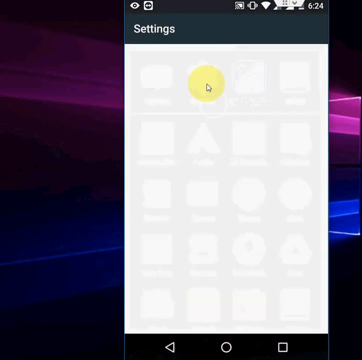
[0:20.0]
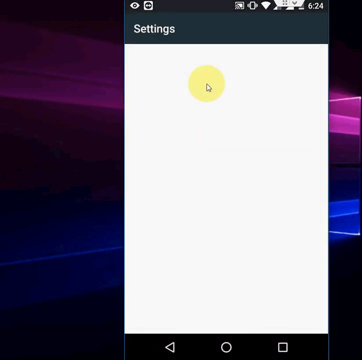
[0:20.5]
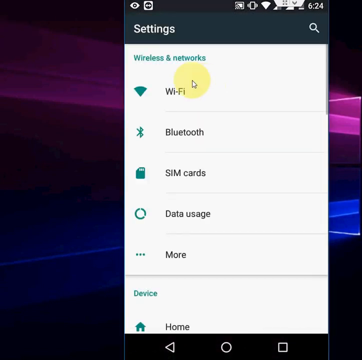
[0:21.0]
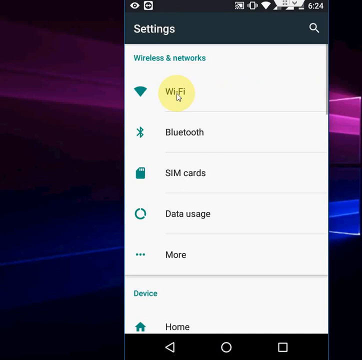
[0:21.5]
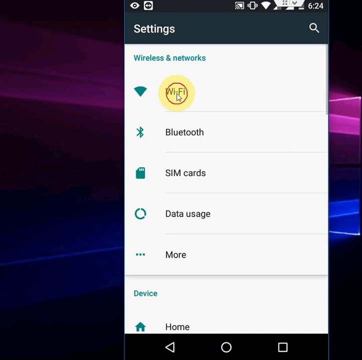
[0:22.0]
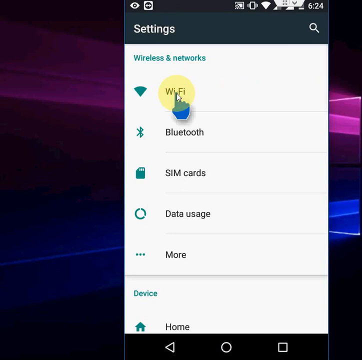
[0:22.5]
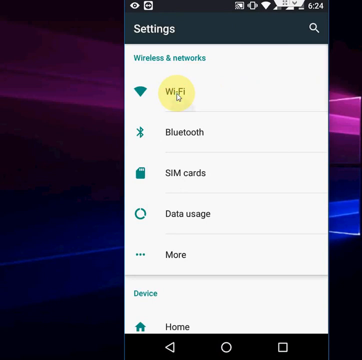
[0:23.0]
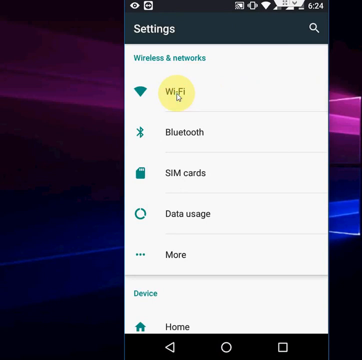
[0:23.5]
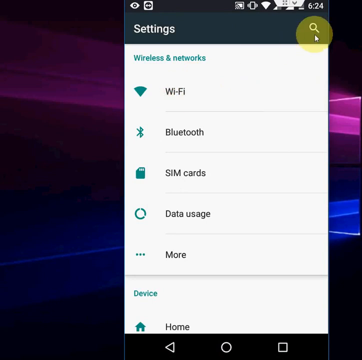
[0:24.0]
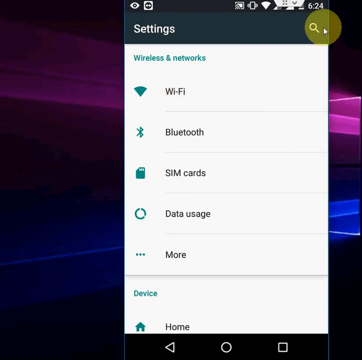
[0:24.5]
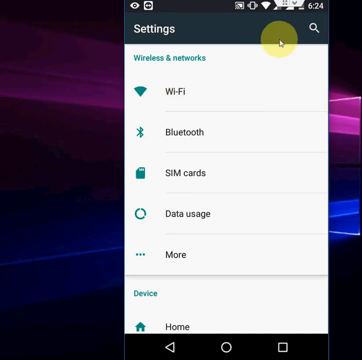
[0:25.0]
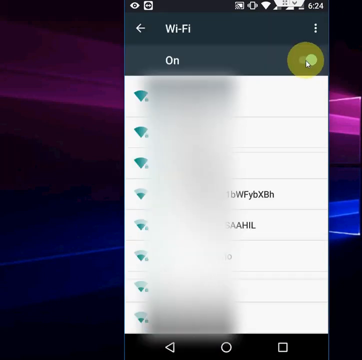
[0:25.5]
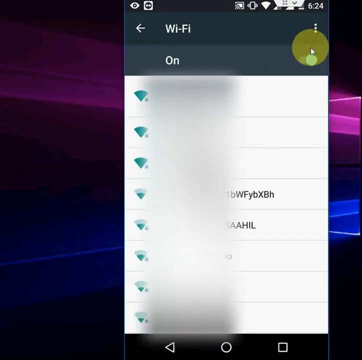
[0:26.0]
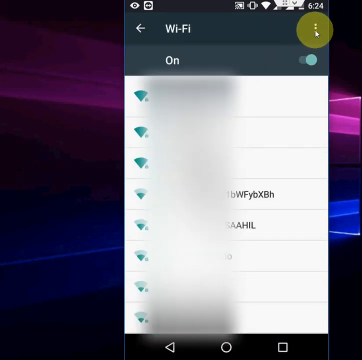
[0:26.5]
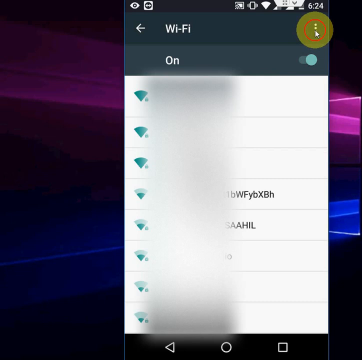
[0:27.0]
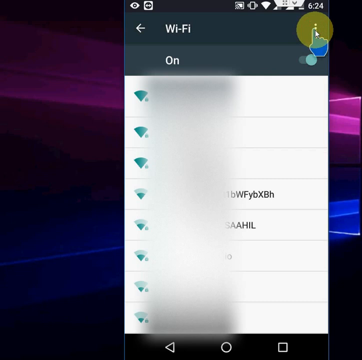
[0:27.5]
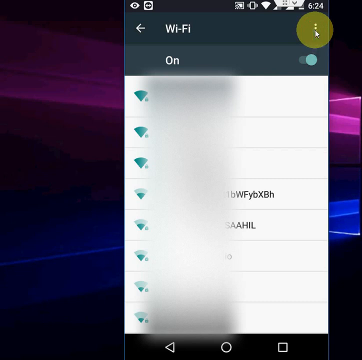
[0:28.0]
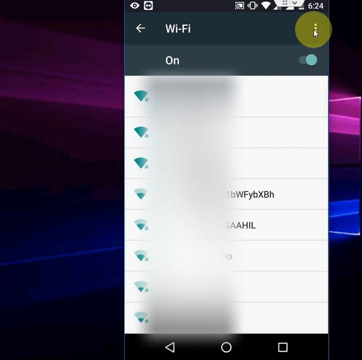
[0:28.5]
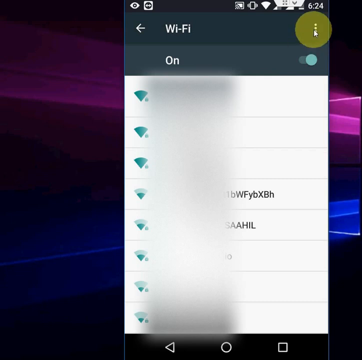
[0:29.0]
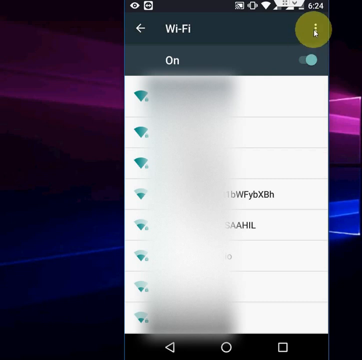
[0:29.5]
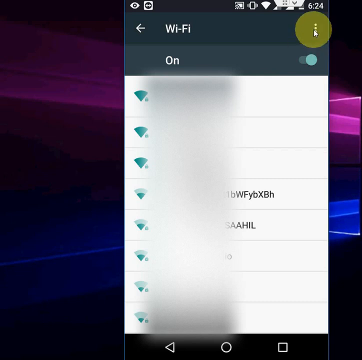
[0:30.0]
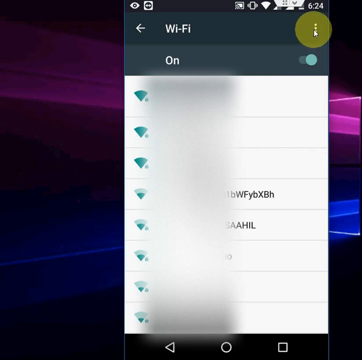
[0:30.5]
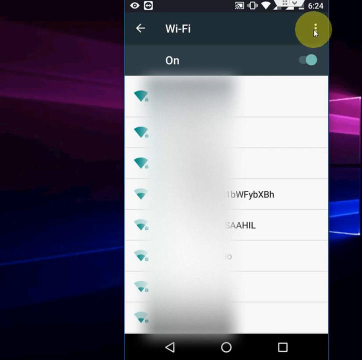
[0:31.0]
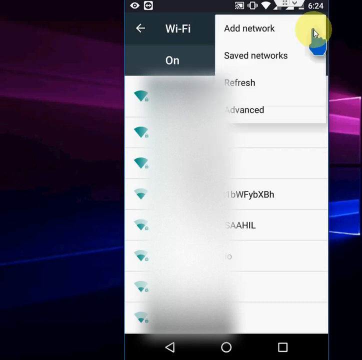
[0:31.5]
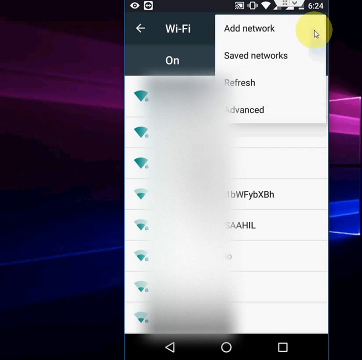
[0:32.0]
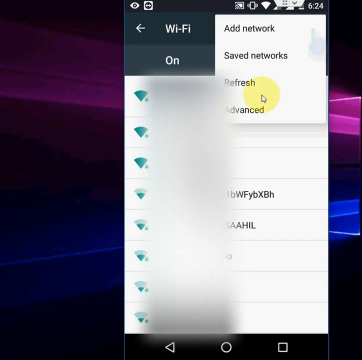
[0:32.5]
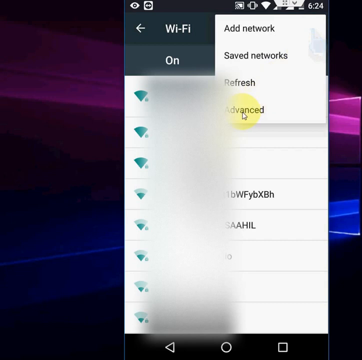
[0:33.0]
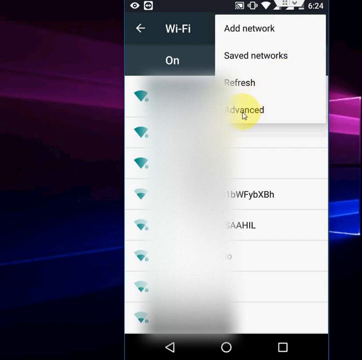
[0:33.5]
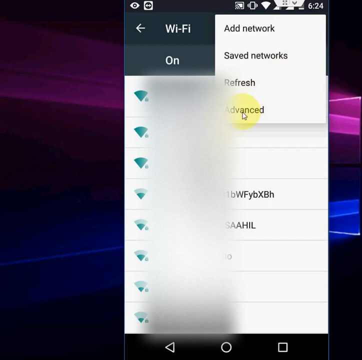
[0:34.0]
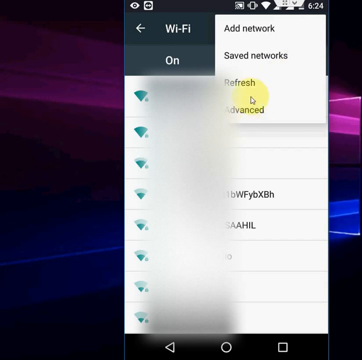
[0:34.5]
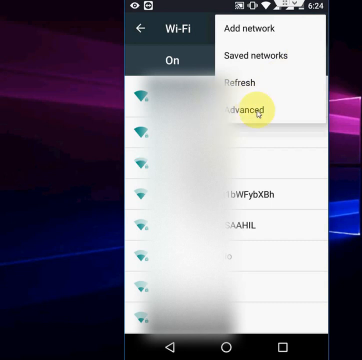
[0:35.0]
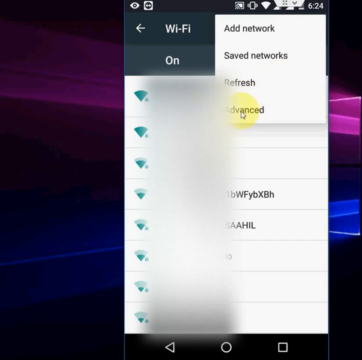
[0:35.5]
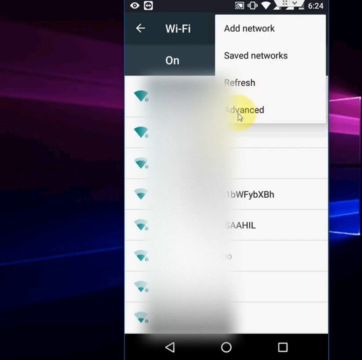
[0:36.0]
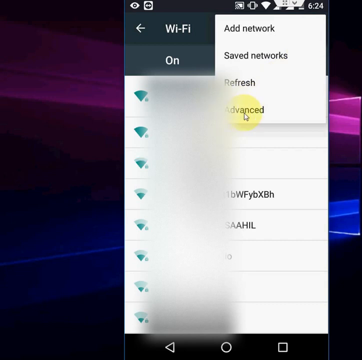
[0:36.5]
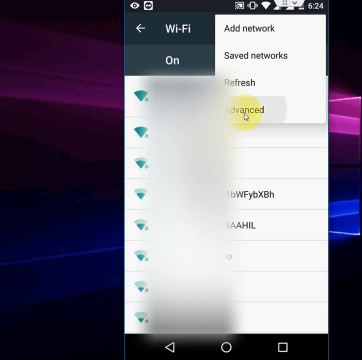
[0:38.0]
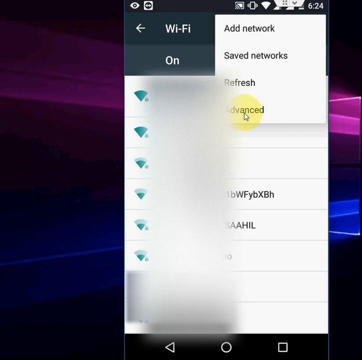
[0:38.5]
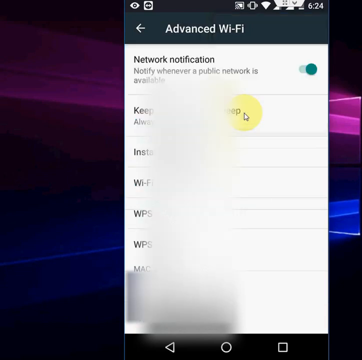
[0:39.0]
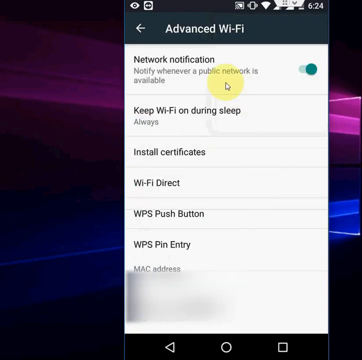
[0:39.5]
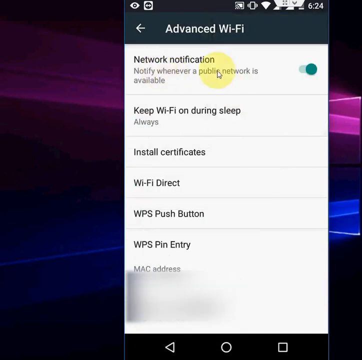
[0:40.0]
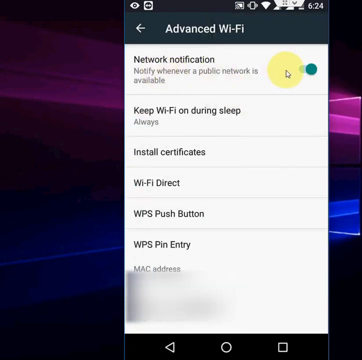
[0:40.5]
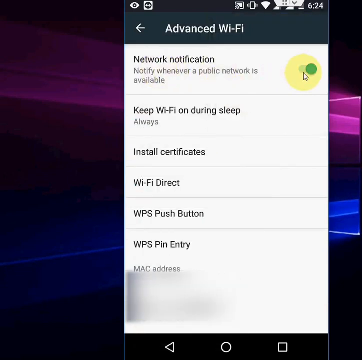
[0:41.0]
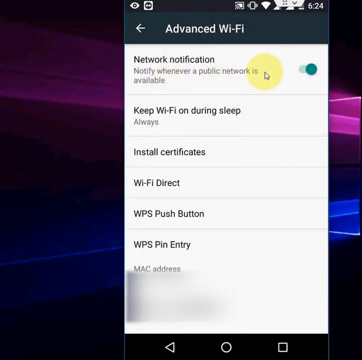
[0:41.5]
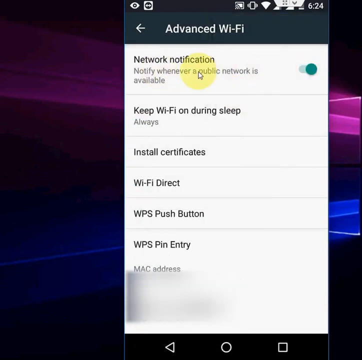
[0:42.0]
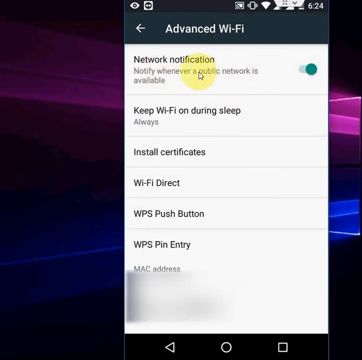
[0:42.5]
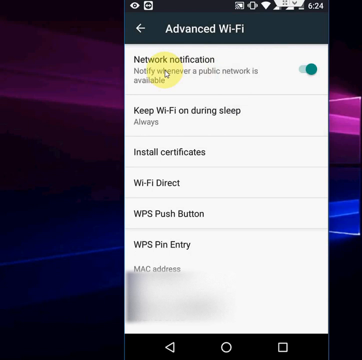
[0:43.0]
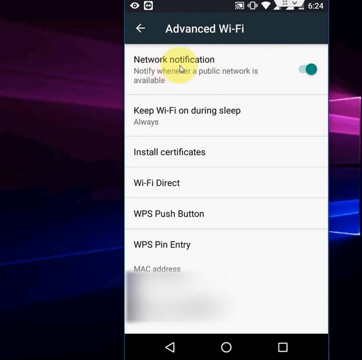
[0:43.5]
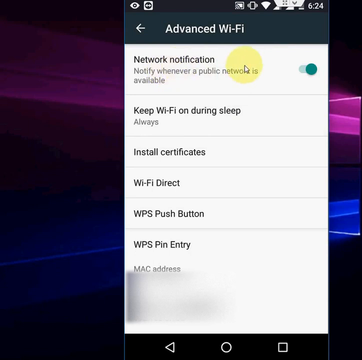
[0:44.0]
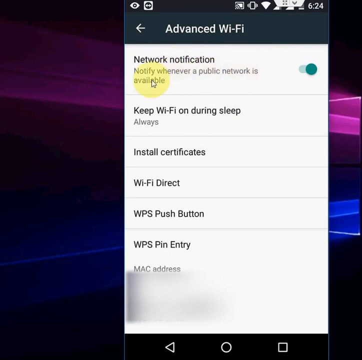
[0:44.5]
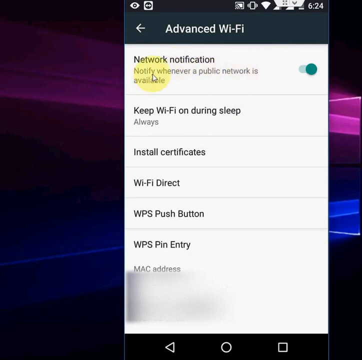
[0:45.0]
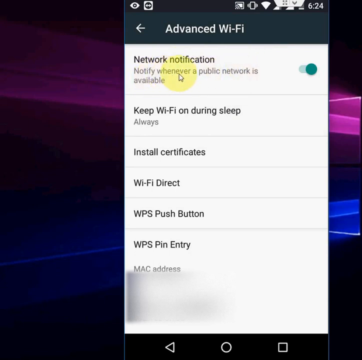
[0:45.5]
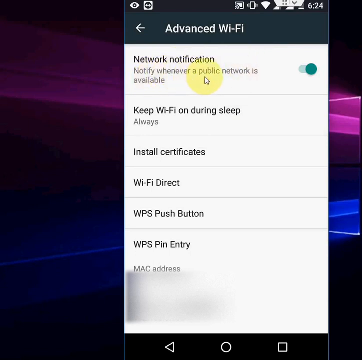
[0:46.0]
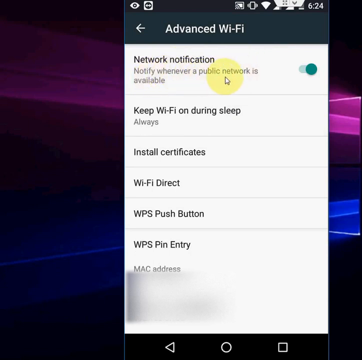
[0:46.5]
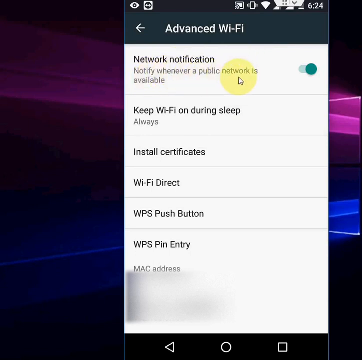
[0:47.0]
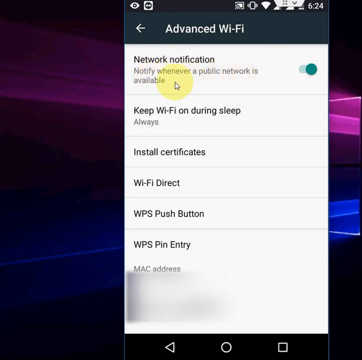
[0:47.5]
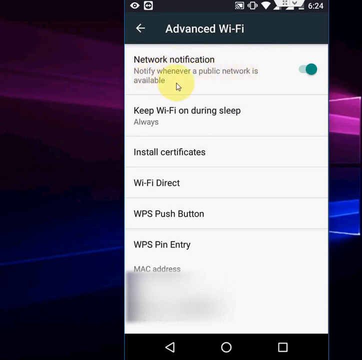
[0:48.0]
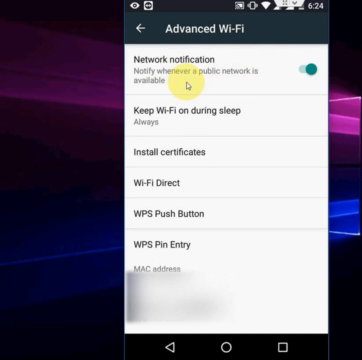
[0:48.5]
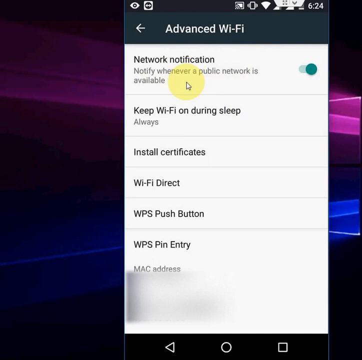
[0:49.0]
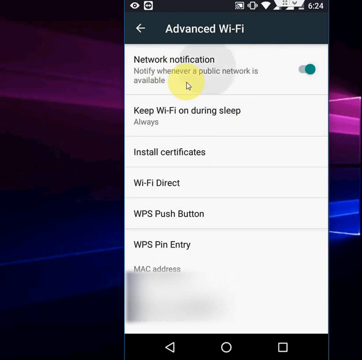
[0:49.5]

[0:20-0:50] A Wi-Fi icon is shown, and the Wi-Fi networks at the bottom are blurred out. The view moves down to the advanced section, which is clicked, showing a network notification setting that is turned on. The sequence apparently demonstrates how to reach the advanced Wi-Fi settings and turn the notification on and off. A list of different items is also shown.